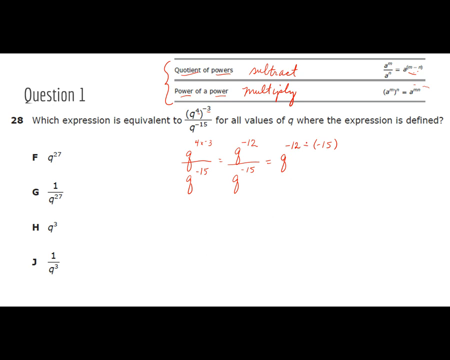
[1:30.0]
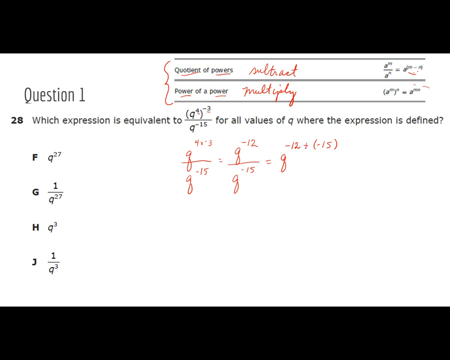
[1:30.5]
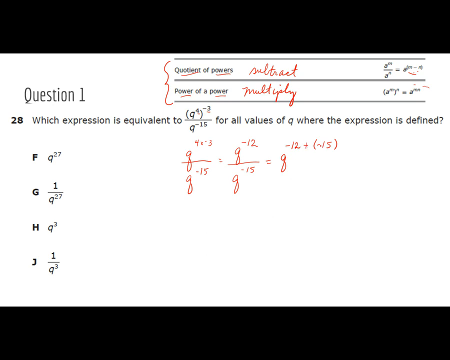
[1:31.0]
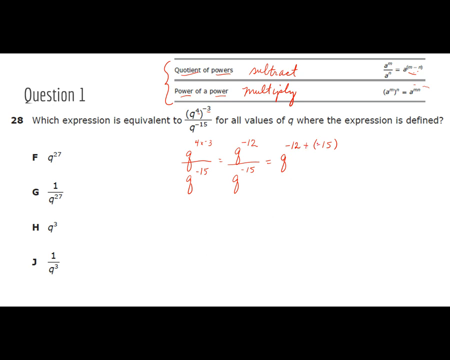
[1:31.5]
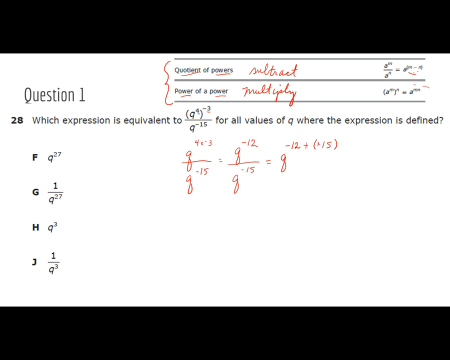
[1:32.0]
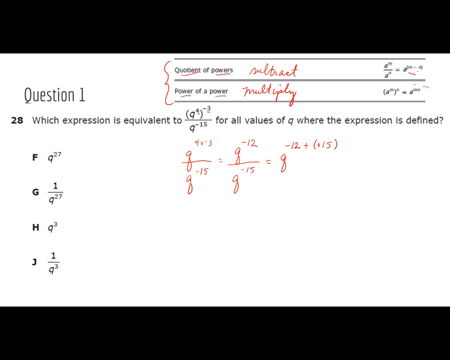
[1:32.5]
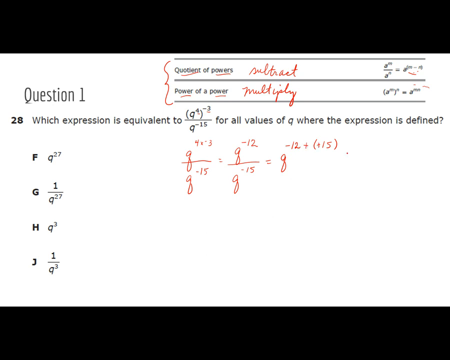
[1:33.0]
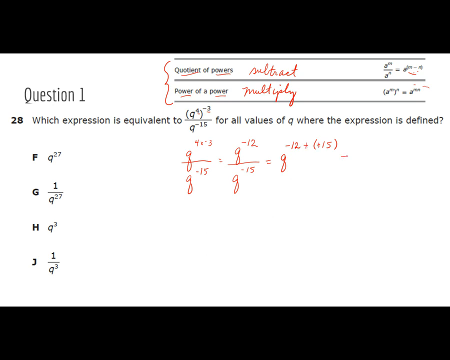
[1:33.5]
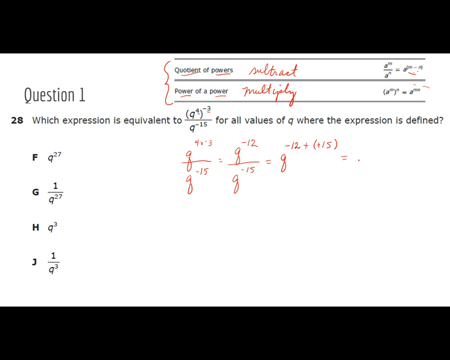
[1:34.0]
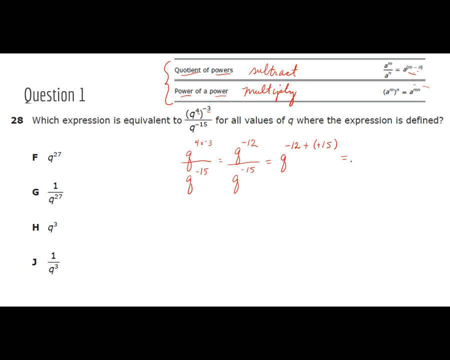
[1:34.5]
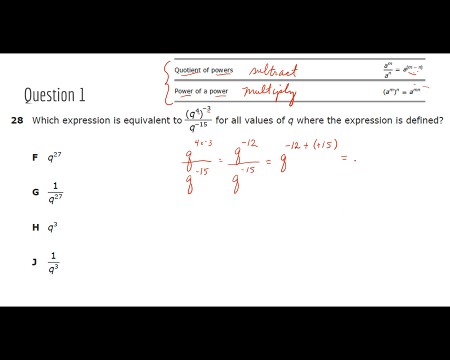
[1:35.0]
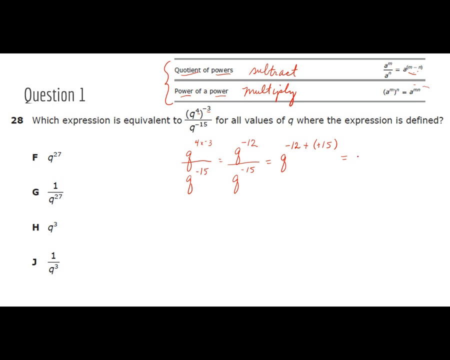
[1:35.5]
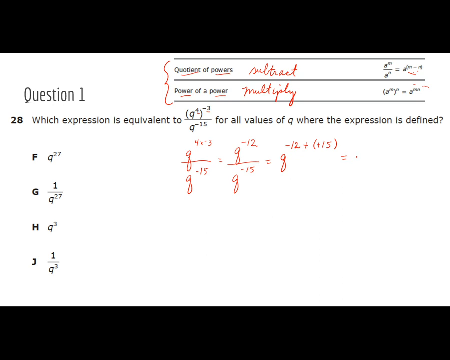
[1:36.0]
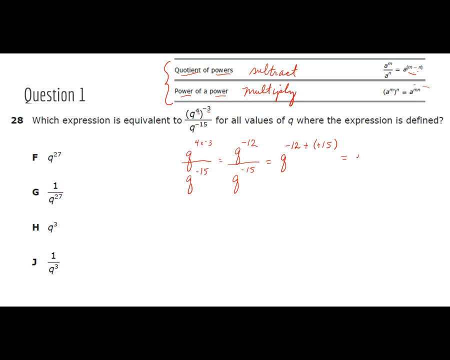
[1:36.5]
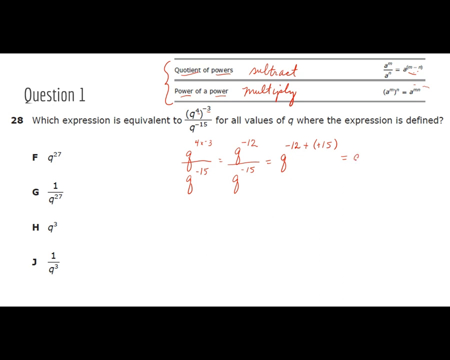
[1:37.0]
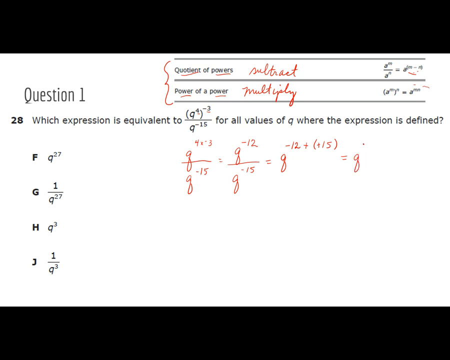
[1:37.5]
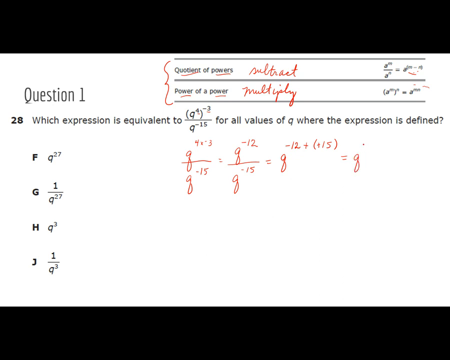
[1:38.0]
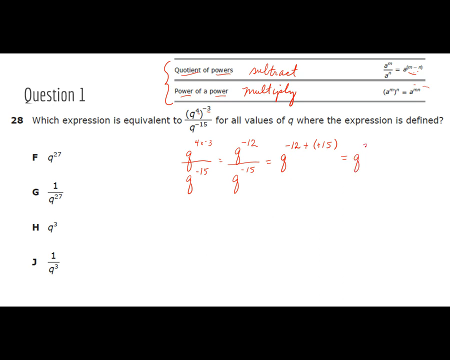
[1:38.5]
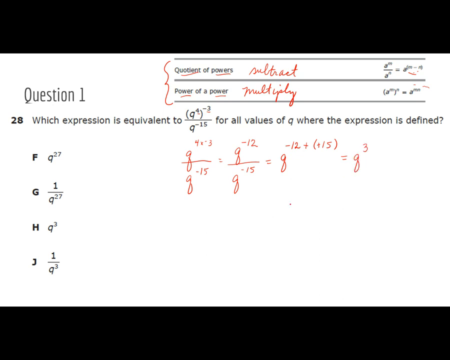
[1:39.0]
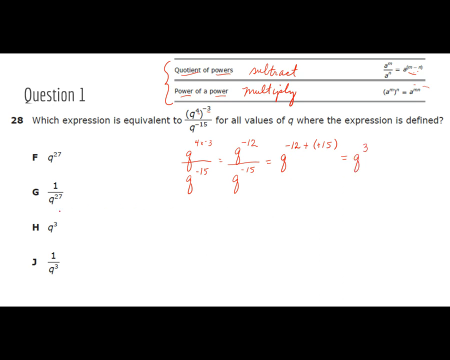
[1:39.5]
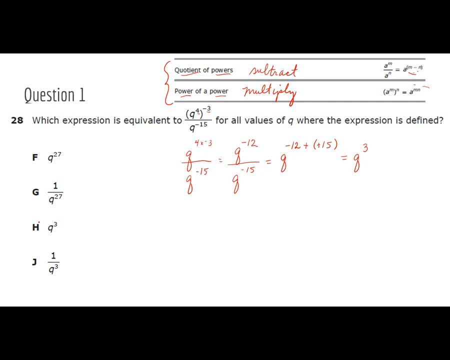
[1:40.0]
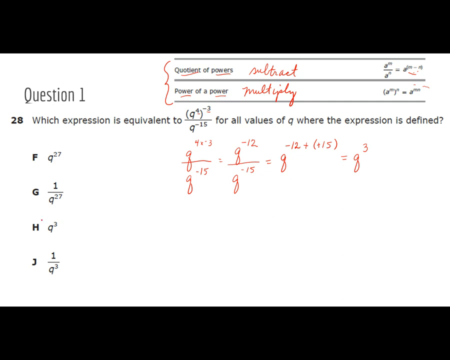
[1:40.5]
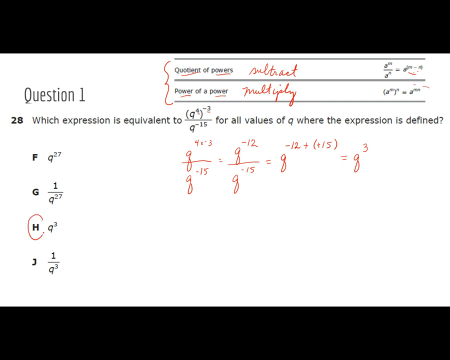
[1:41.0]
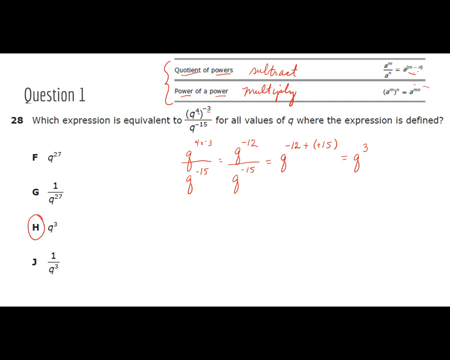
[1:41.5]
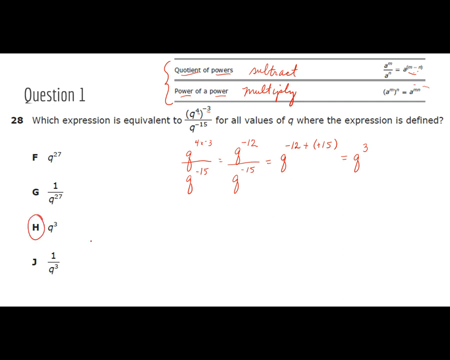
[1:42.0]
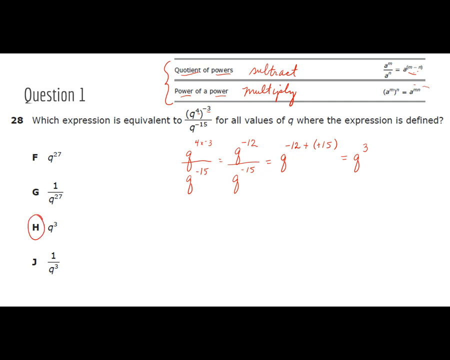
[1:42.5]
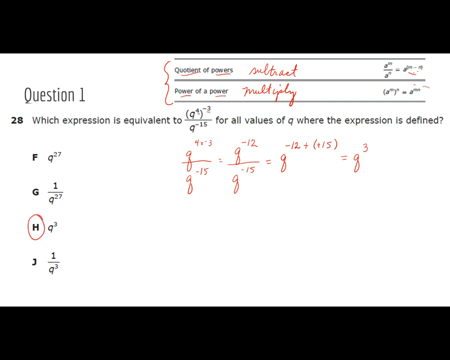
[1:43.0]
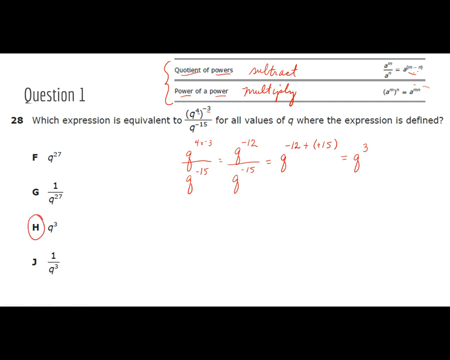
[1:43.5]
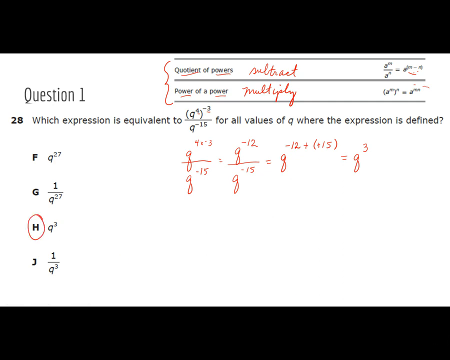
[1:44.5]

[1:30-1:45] The working continues after the equals sign, now reading: q to the power of 4 times minus 3 divided by q to the power of minus 15 equals q to the power of minus 12 divided by q to the power of minus 15, equals q to the power of minus 12 plus (15), equals q to the power of 3. The cursor goes below and underlines the letter H, whose option is q to the power of 3, indicating H as the answer to the question.